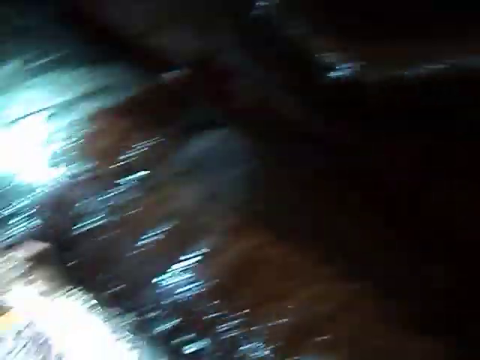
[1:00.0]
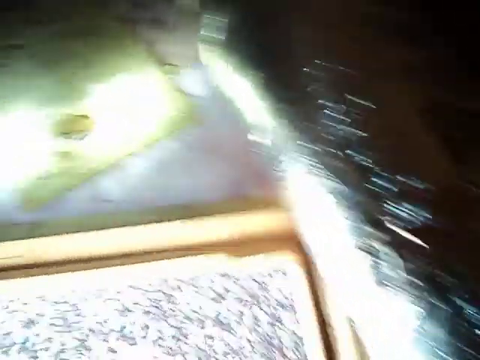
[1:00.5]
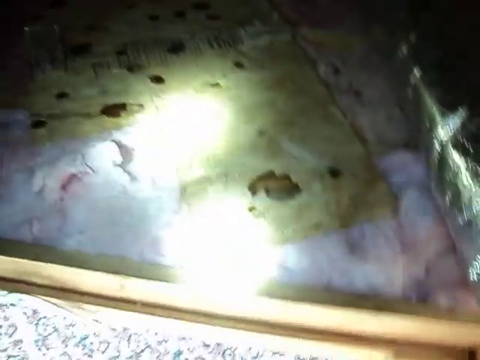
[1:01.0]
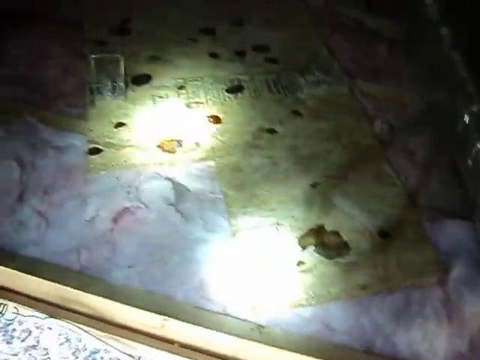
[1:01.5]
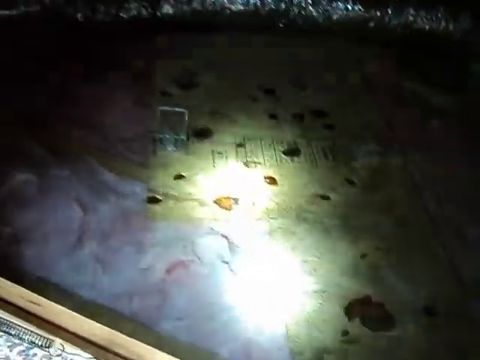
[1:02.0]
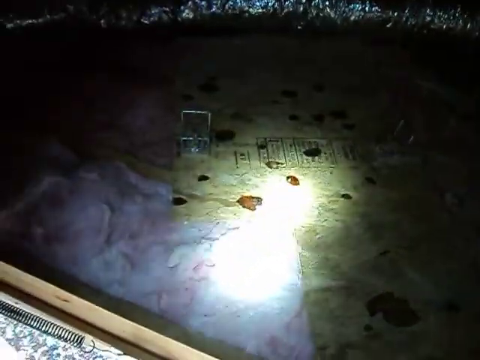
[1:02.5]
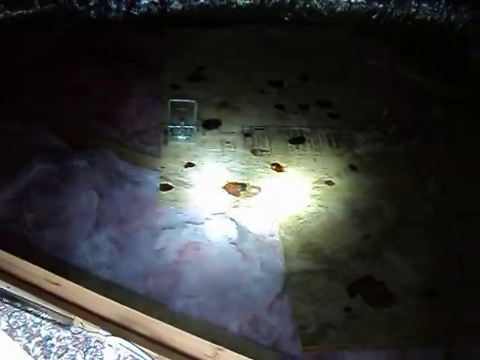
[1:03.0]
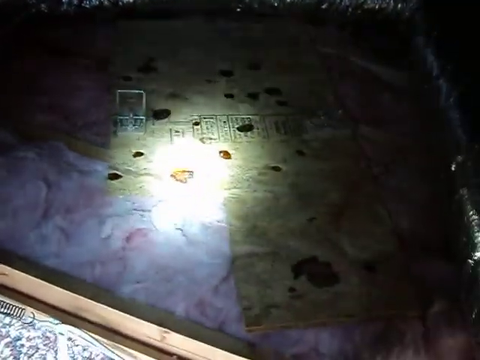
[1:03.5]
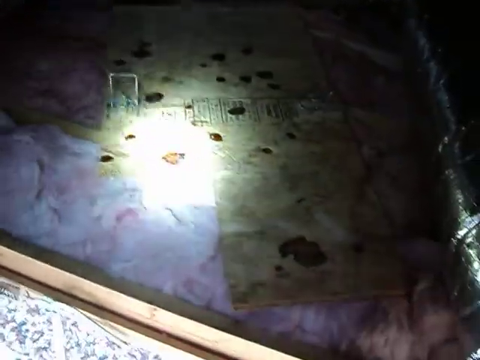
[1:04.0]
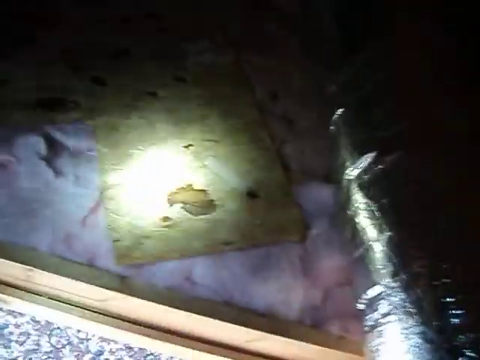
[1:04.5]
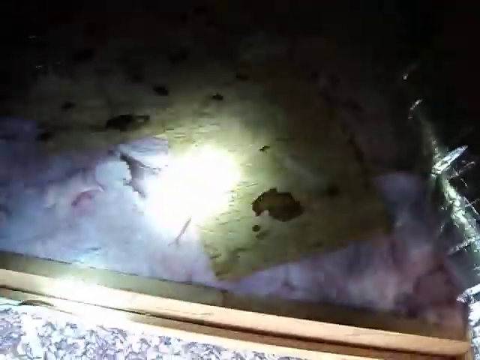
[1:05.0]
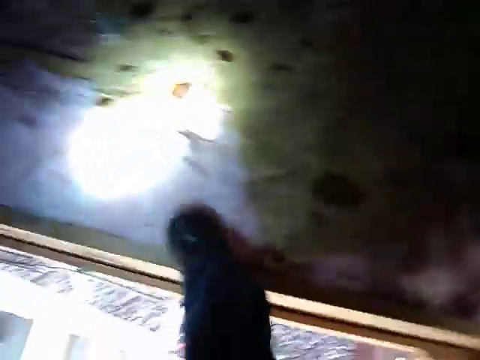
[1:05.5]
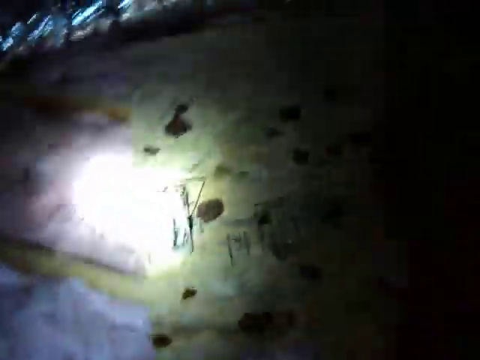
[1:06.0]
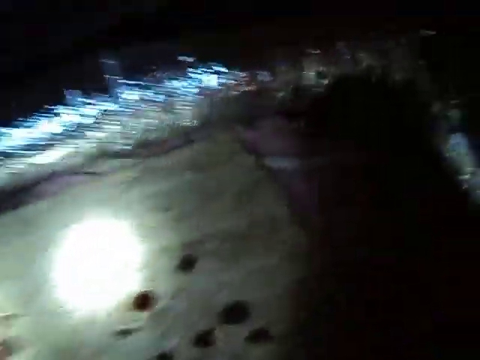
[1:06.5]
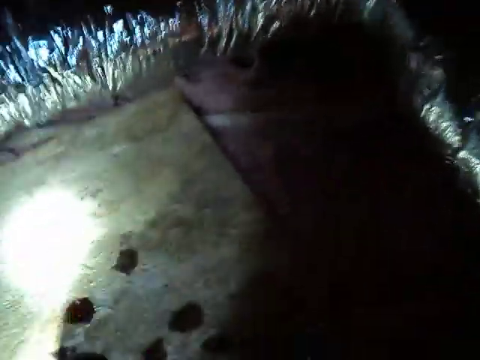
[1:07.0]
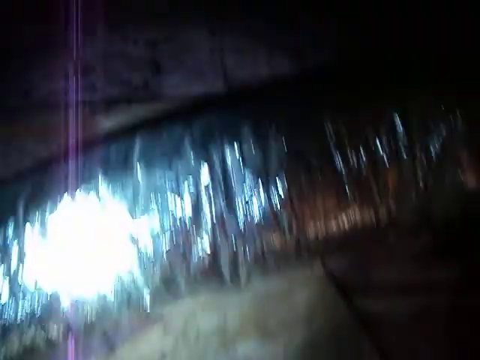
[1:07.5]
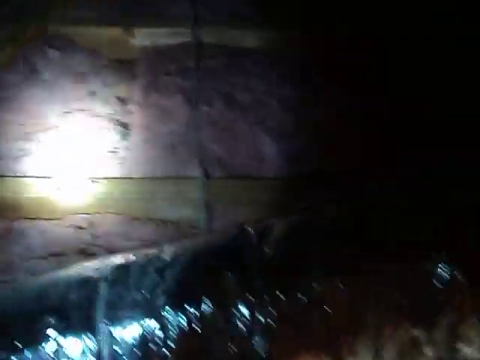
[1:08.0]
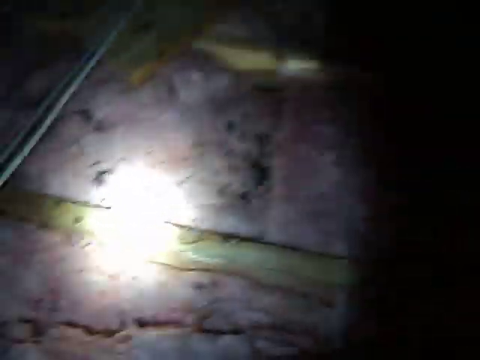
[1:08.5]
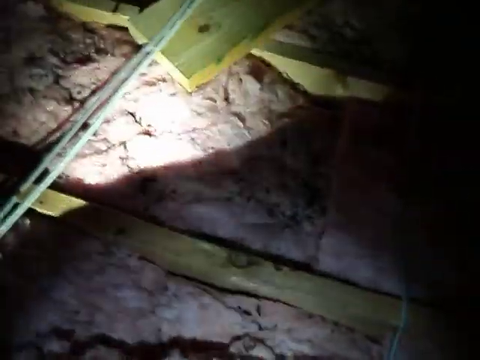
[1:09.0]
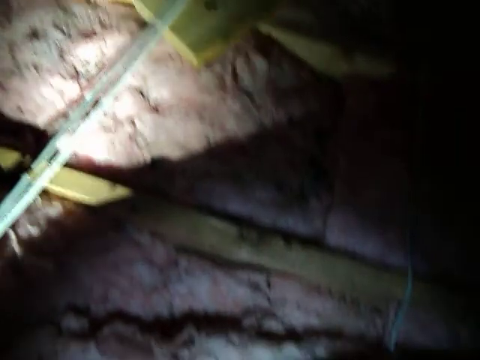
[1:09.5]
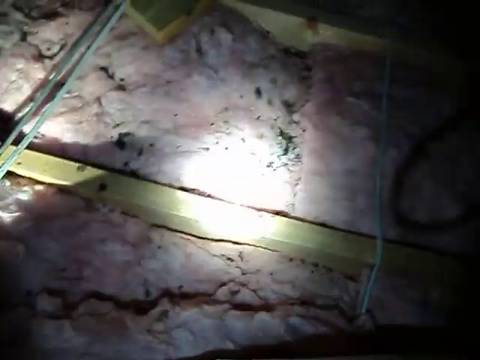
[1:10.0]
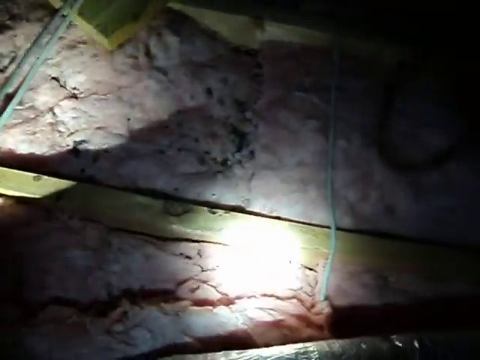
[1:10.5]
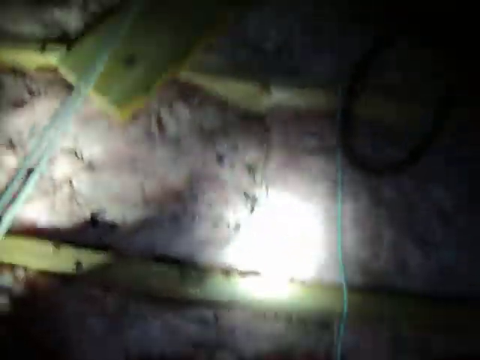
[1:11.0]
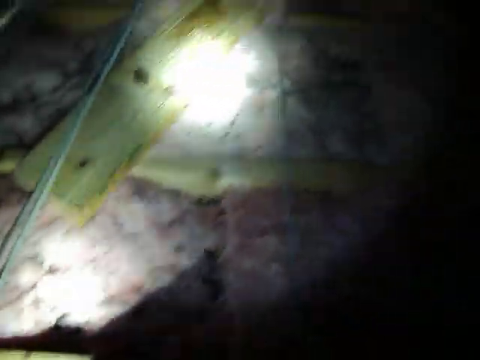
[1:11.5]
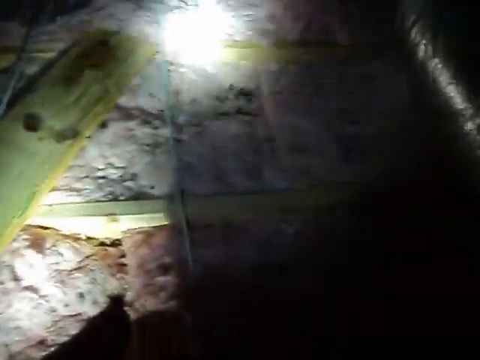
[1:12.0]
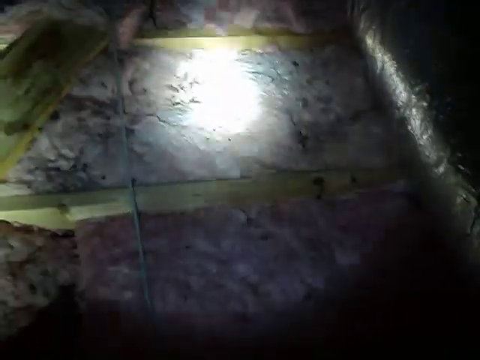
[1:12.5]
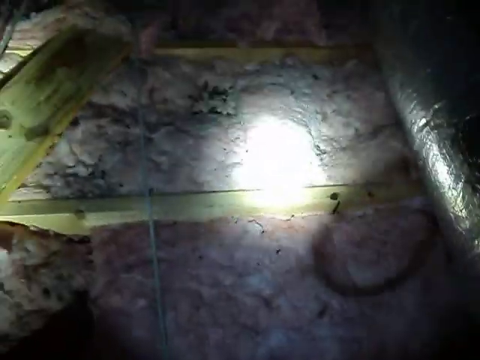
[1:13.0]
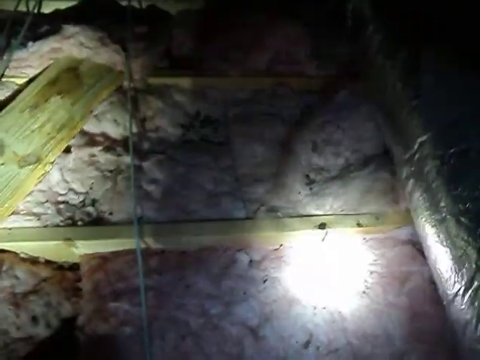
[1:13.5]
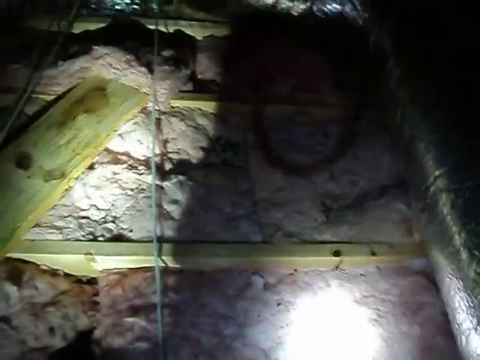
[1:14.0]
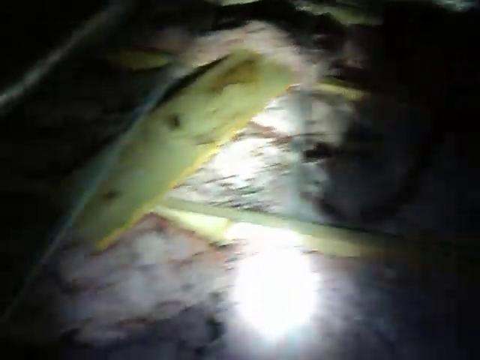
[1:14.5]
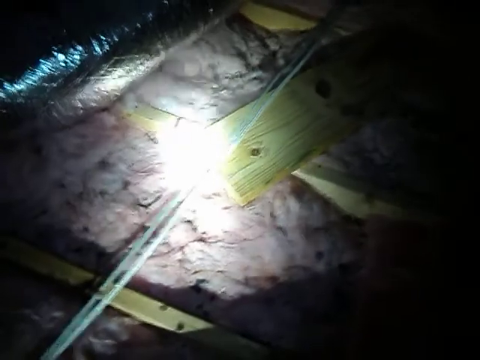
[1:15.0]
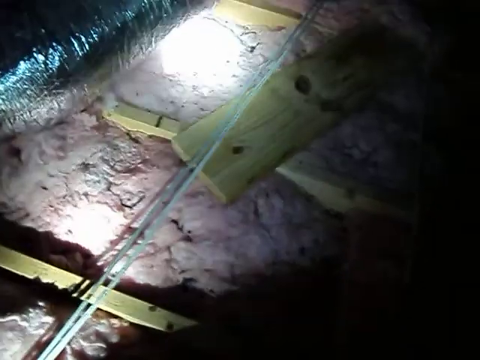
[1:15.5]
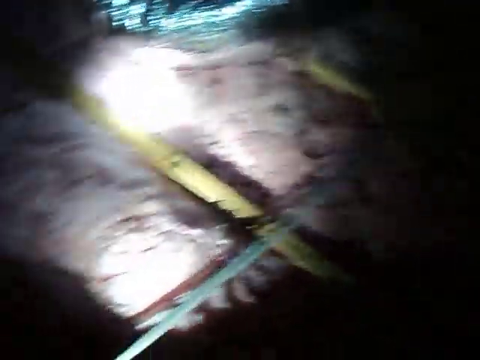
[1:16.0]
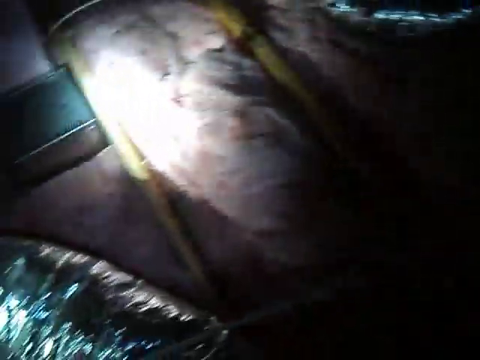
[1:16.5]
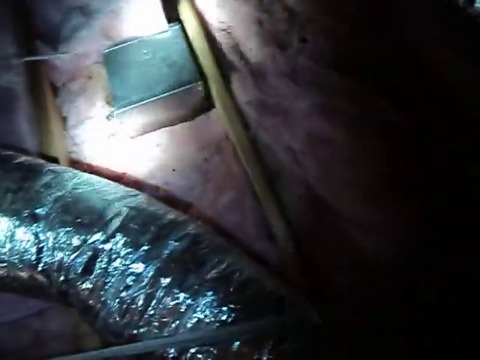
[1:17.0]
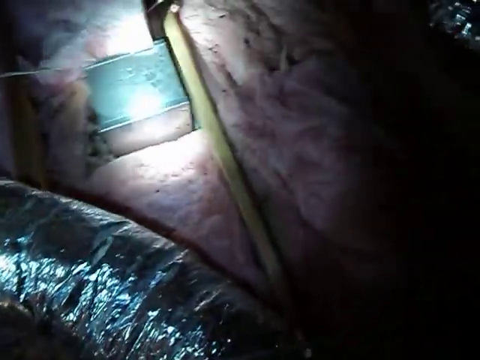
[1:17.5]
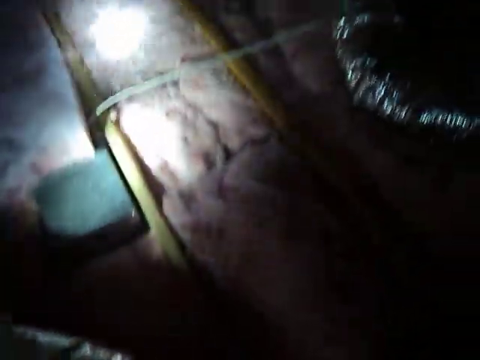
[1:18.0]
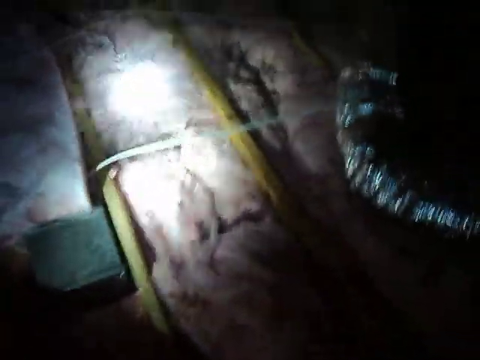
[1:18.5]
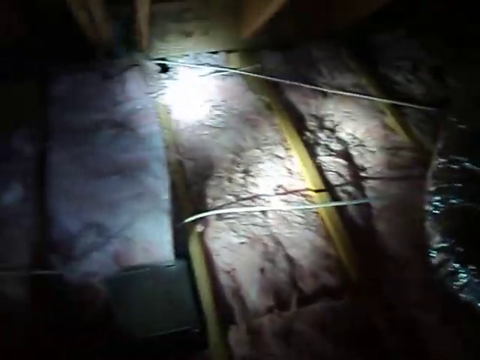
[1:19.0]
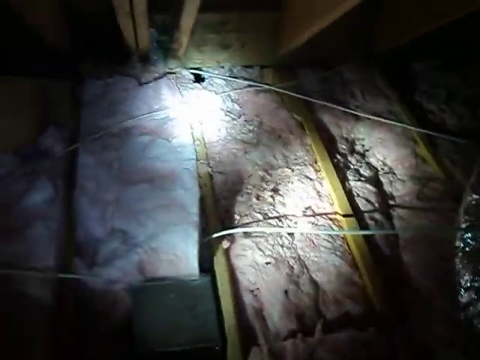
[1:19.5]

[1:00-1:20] In a dark attic, the person filming holds the camera and a flashlight, and only what the flashlight illuminates is visible. The light is on insulation on the attic floor, showing the floor joist and the pink batt insulation. Silver ducts from an AC unit shine, reflecting the flashlight. The camera is pretty shaky, but flakes of black stuff are visible on top of the batt insulation, and the person shines the light on the black stuff. They move the light somewhat all around the attic, illuminating different wires and the floor joists.